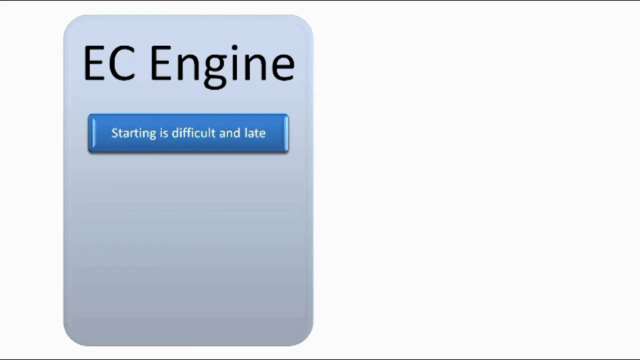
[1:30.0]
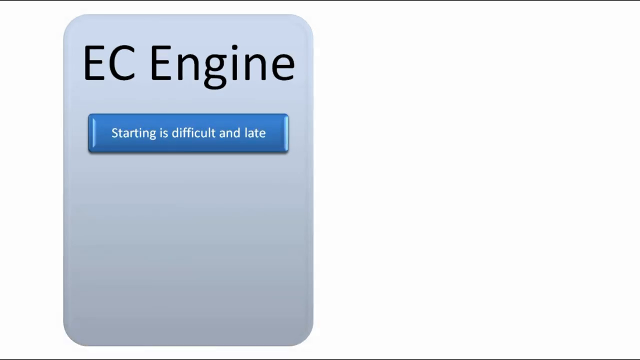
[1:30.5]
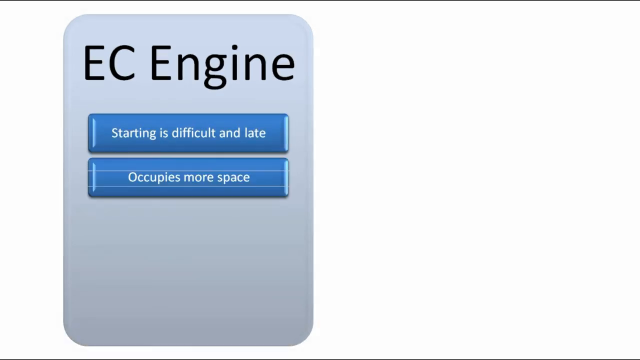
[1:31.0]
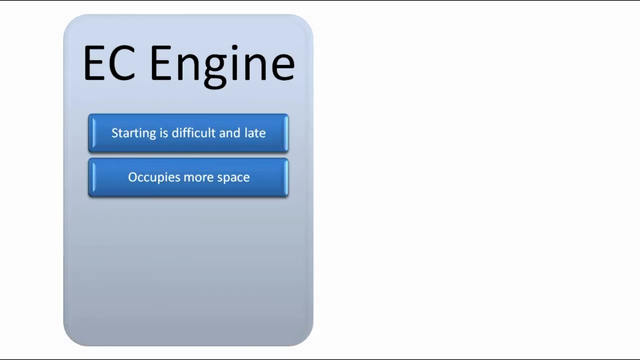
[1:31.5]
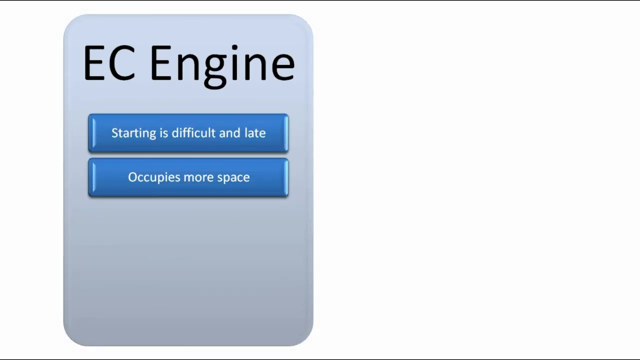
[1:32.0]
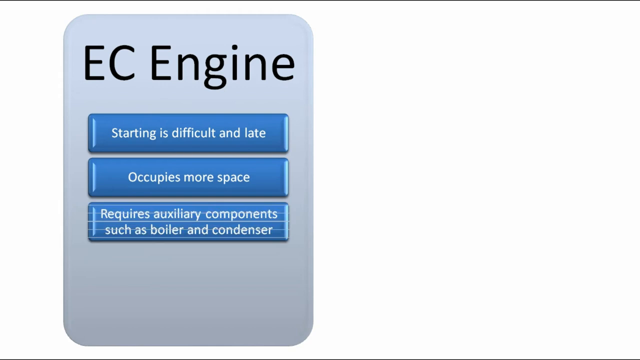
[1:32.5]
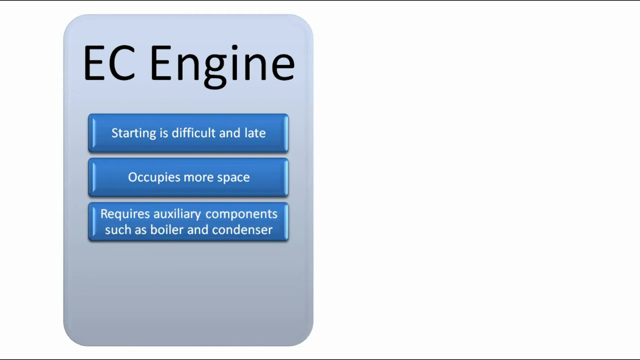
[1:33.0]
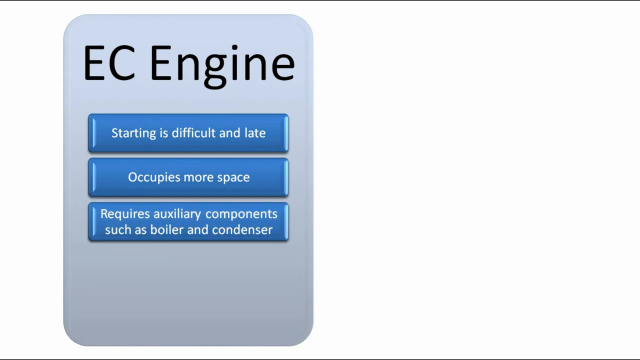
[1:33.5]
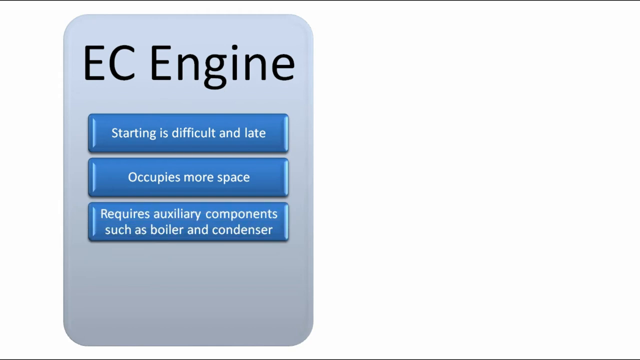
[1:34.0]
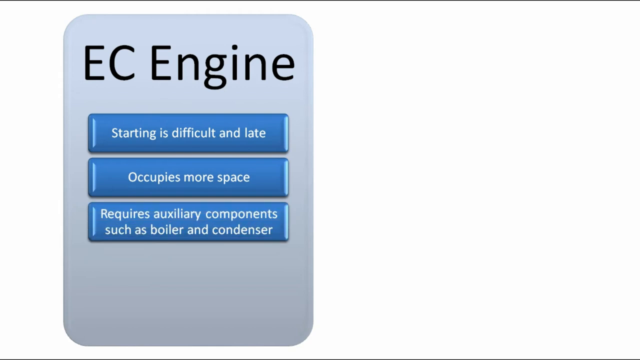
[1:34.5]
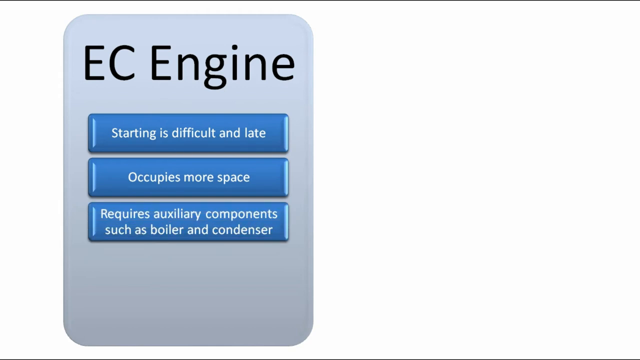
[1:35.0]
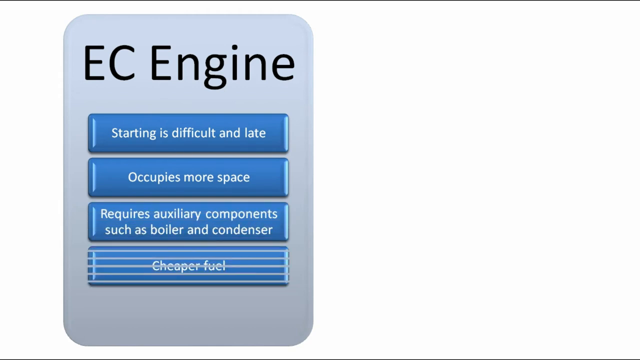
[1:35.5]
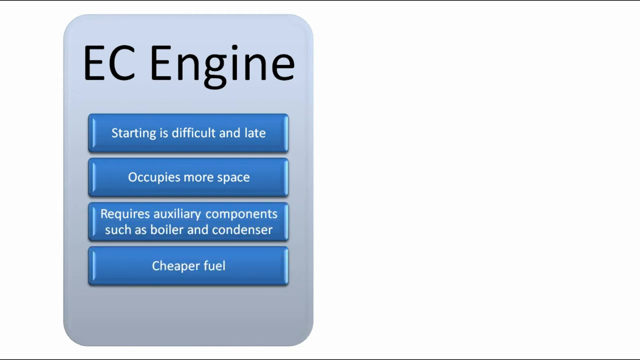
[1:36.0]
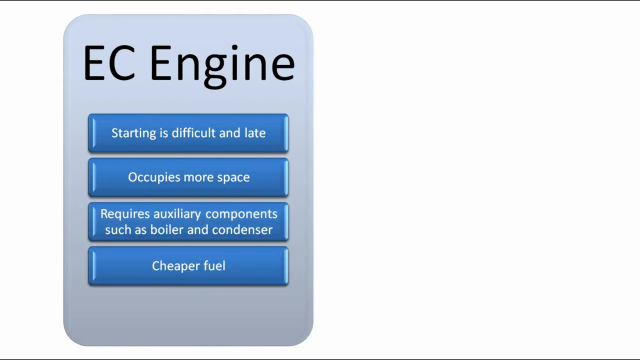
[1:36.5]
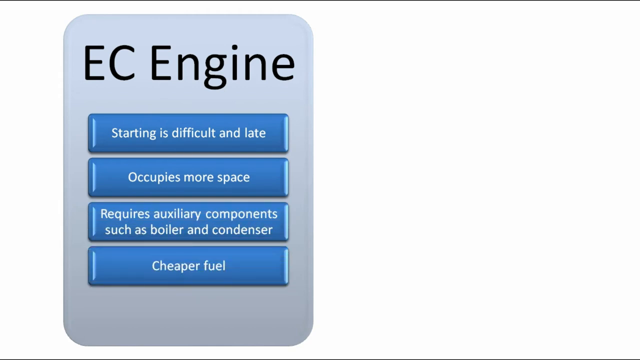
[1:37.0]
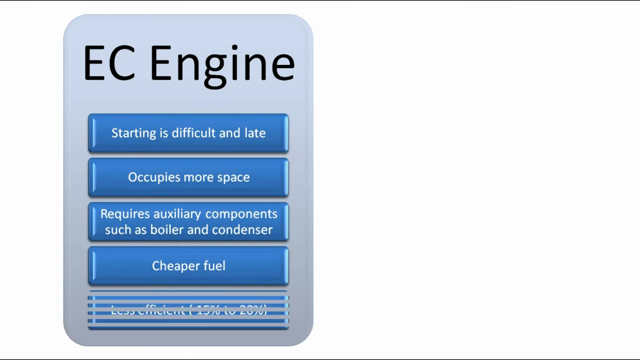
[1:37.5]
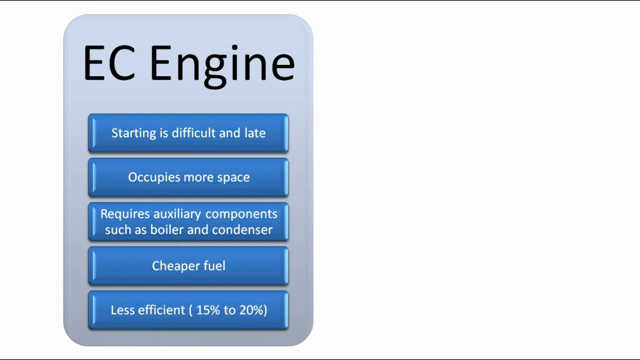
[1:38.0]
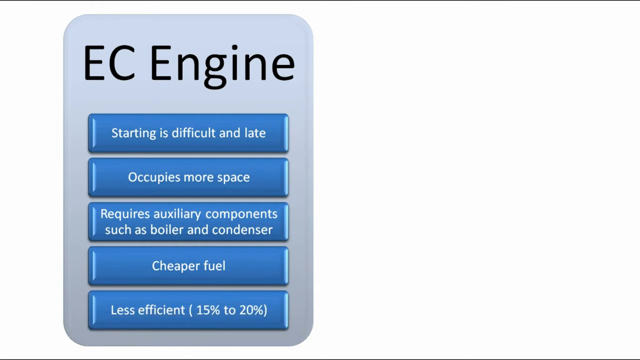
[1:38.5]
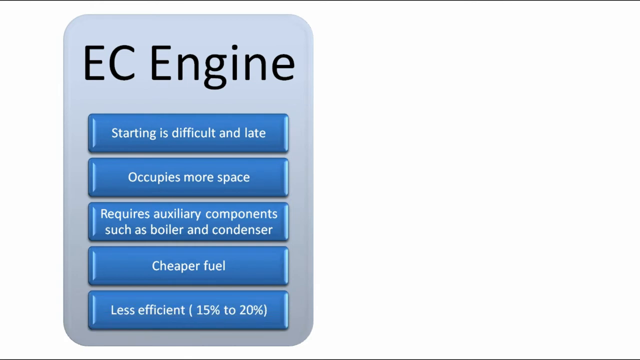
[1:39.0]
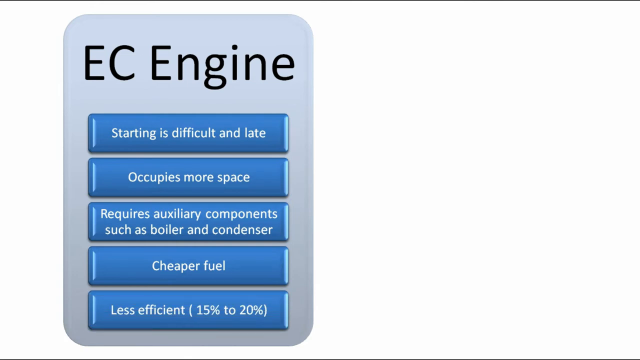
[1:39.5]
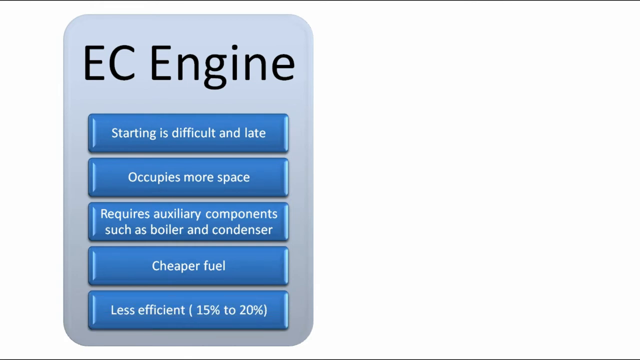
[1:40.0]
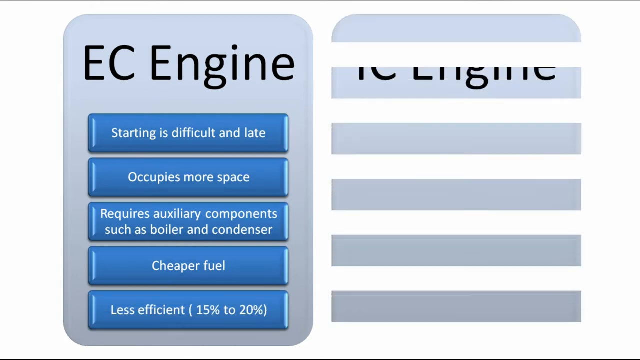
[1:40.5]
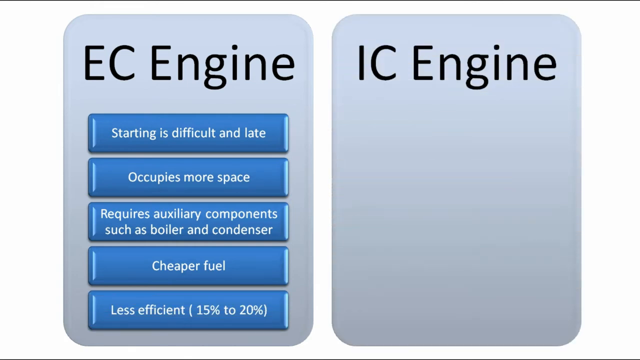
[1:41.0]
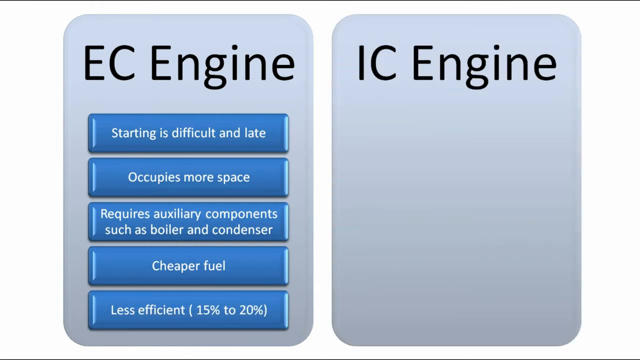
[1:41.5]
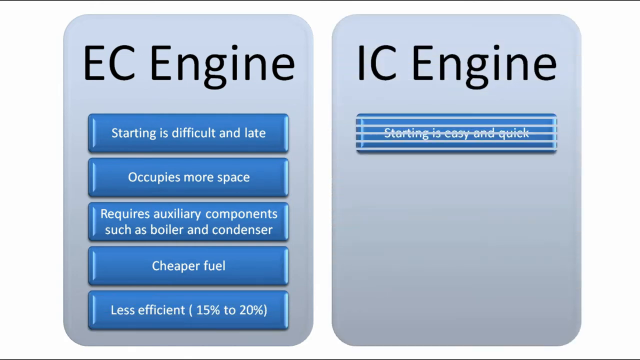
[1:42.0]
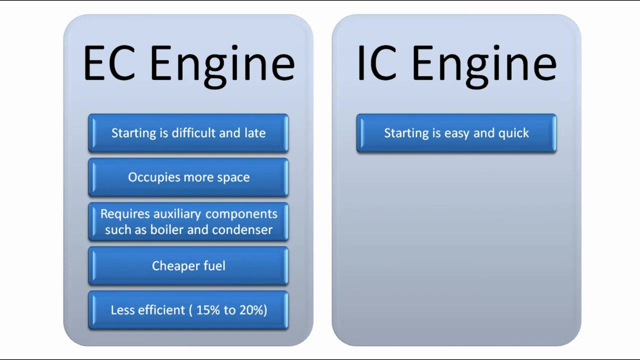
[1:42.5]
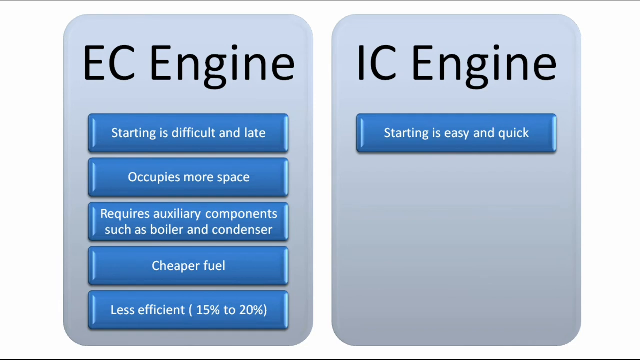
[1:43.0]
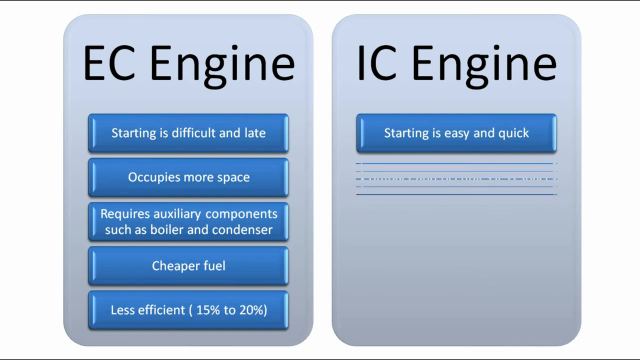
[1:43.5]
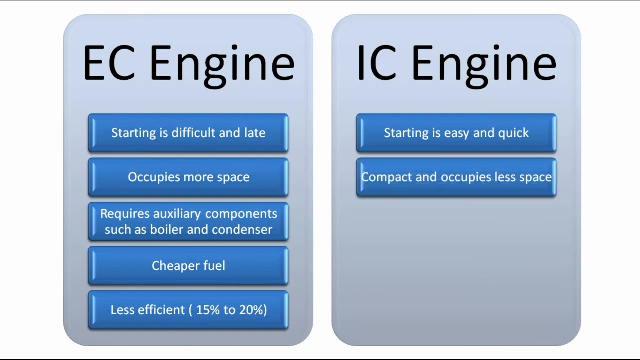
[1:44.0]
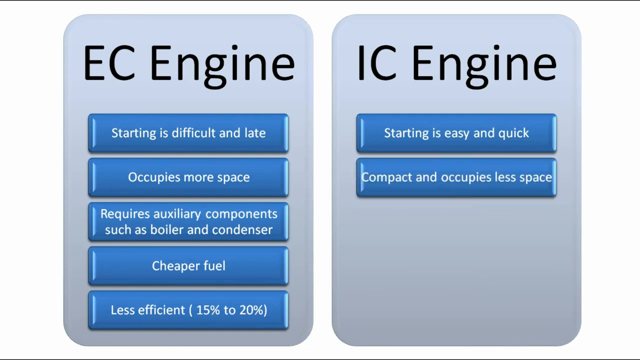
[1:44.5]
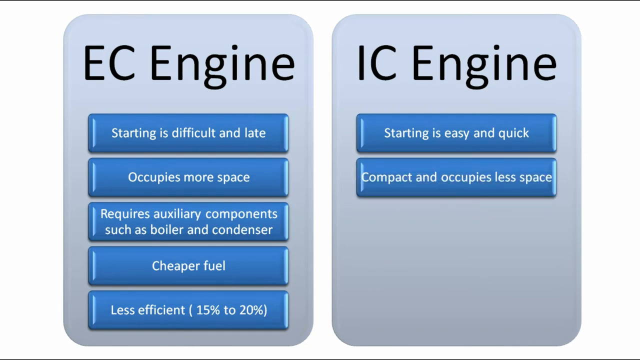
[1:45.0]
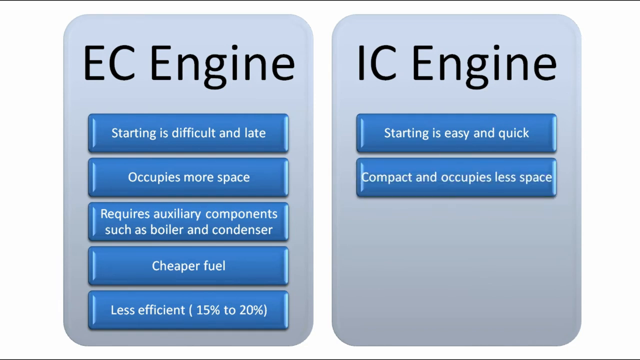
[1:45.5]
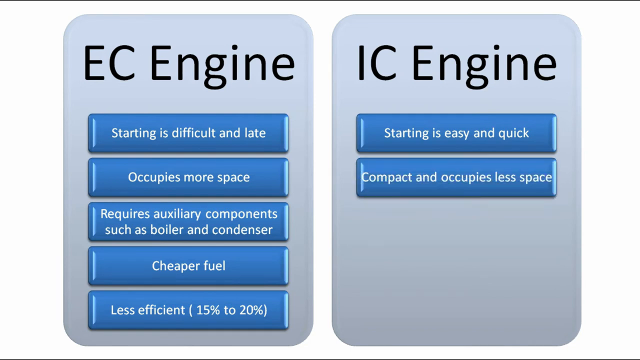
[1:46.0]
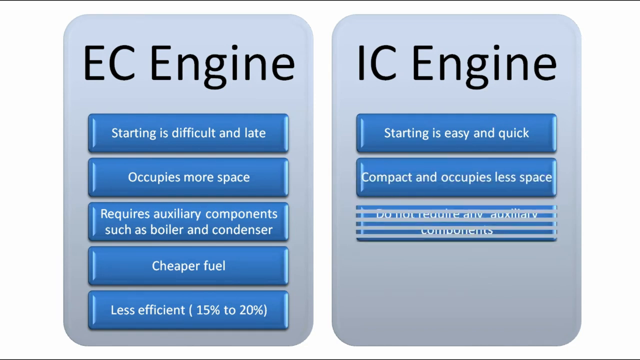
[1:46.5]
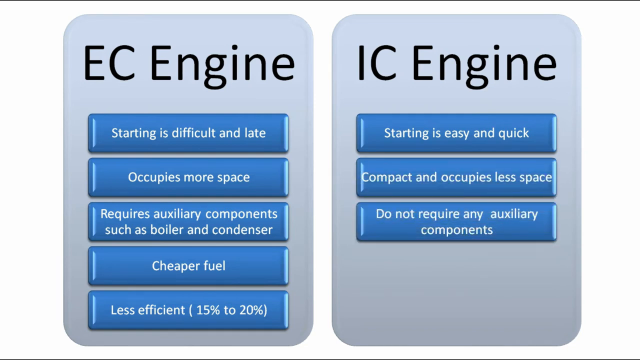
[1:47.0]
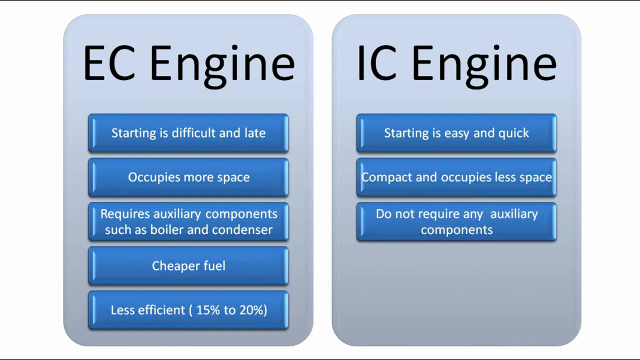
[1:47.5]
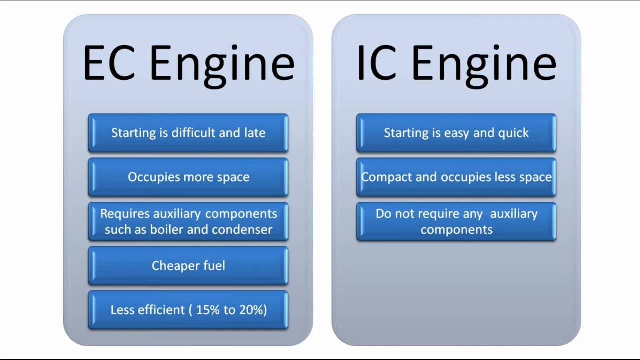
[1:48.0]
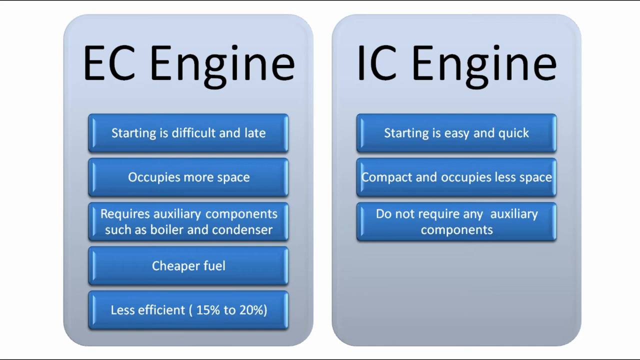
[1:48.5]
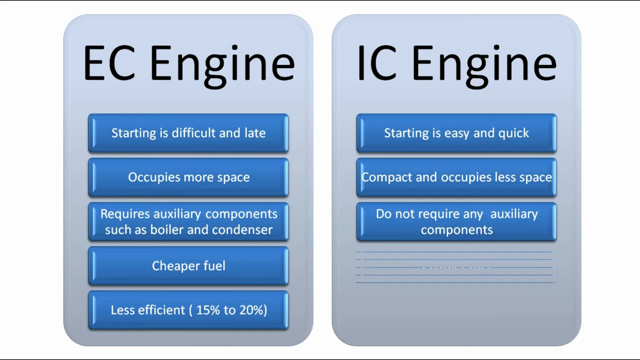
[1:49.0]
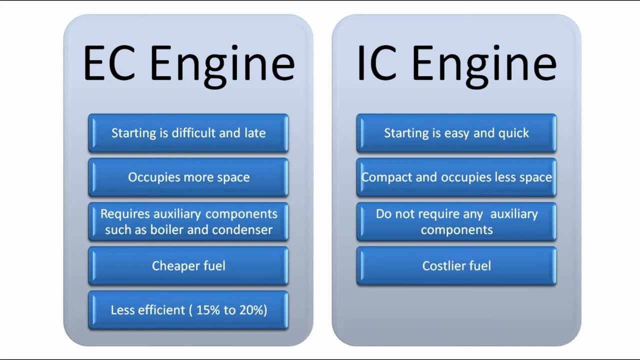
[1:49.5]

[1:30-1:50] The video appears to be a PowerPoint presentation. A light blue rectangle is on the left side, with black text inside at the top reading "EC engine." Beneath it is a blue rectangle with white text reading "starting is difficult and late." Another blue rectangle appears below reading "occupies more space," then a third reading "requires auxiliary components such as boiler and condenser," a fourth reading "cheaper fuel," and a fifth reading "less efficient, 15 percent to 20 percent." On the right side another light blue rectangle appears, reading "IC engine" at the top in black text. A blue rectangle appears below it reading "starting is easy and quick," then a second reading "compact and occupies less space," a third reading "do not require any auxiliary components," and a fourth reading "costlier fuel."